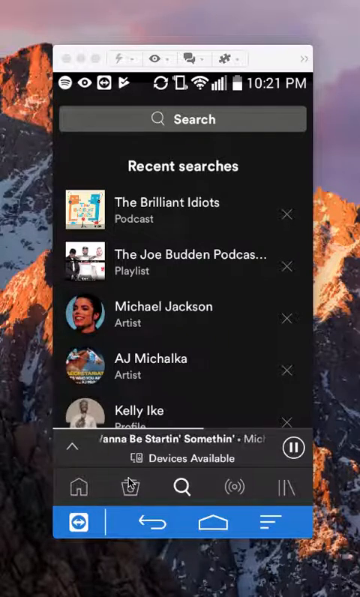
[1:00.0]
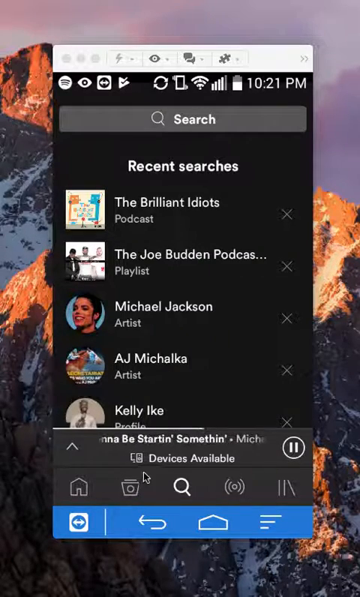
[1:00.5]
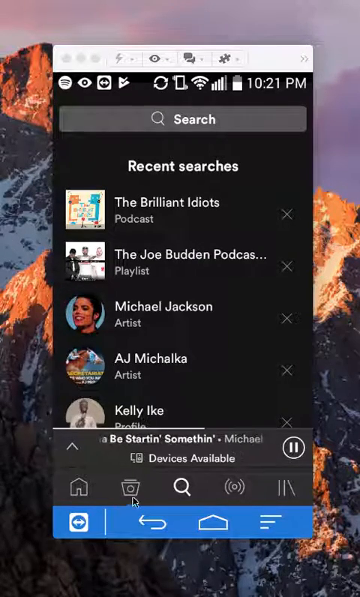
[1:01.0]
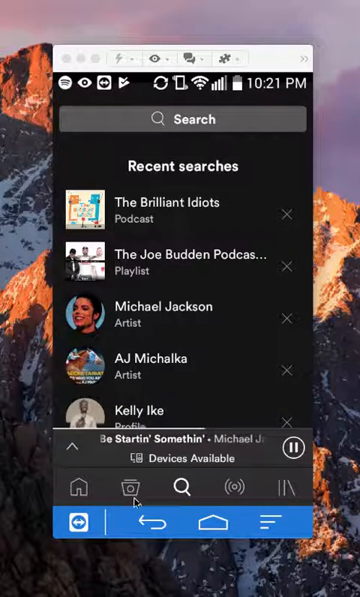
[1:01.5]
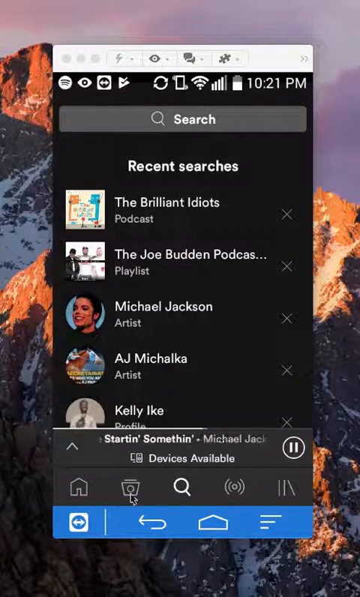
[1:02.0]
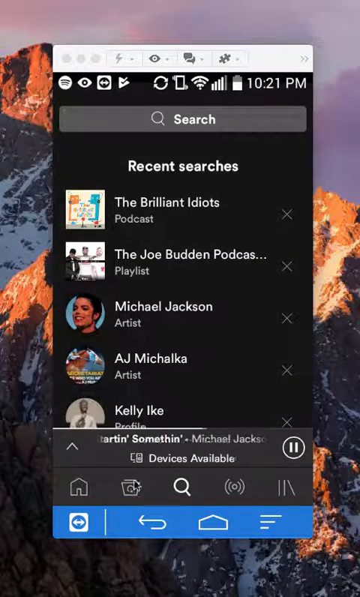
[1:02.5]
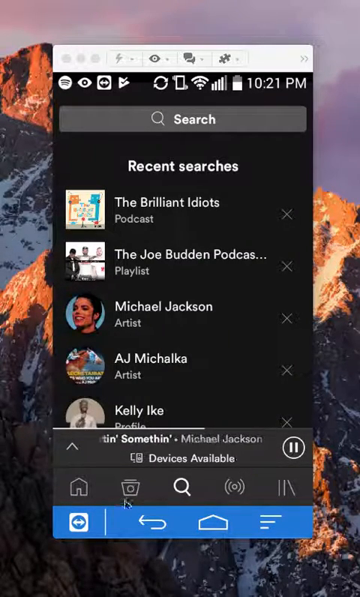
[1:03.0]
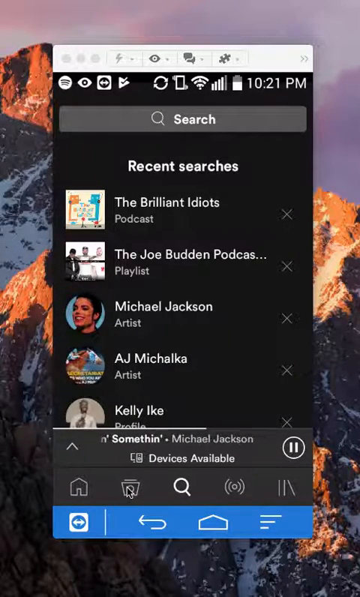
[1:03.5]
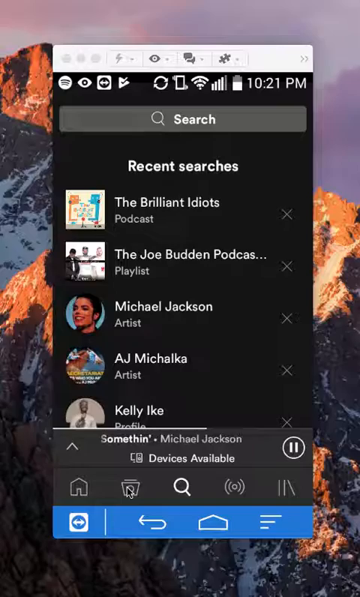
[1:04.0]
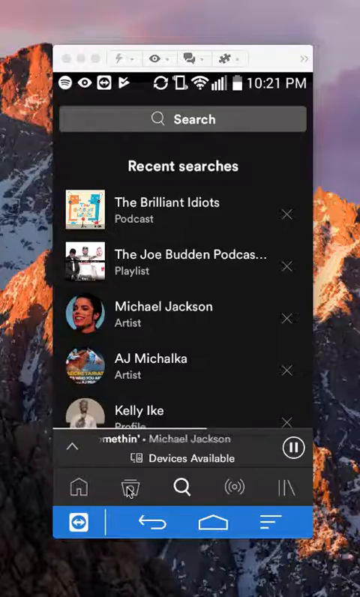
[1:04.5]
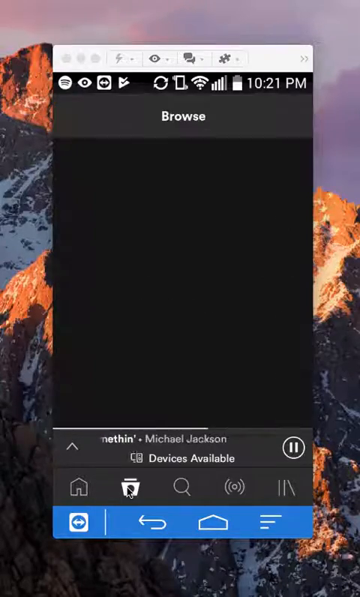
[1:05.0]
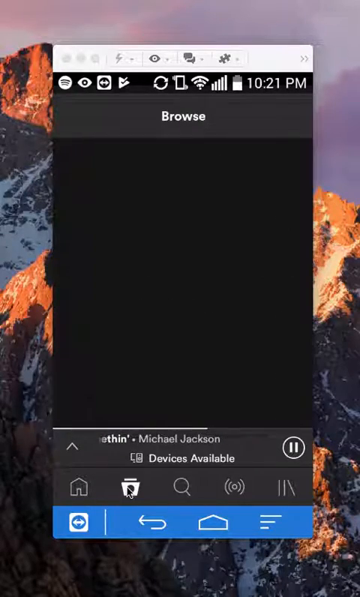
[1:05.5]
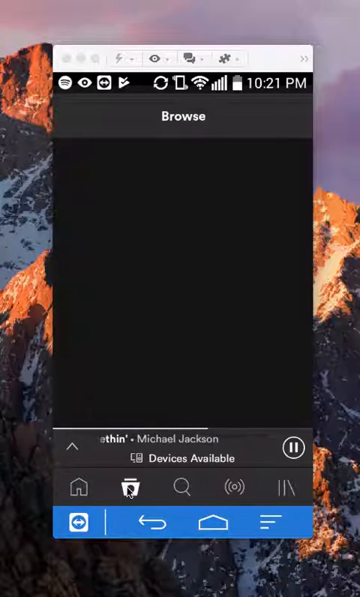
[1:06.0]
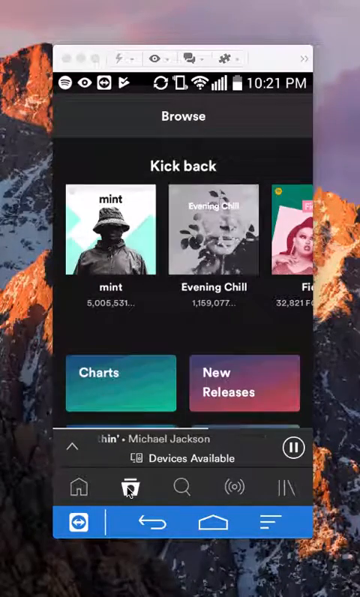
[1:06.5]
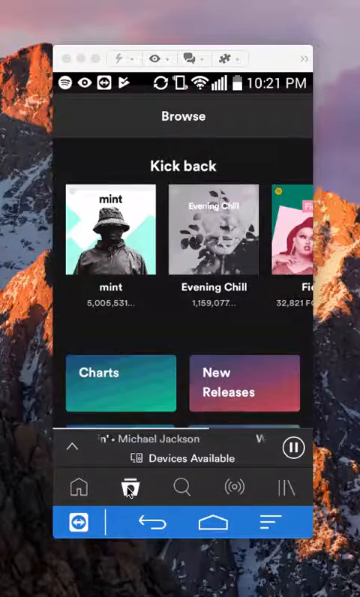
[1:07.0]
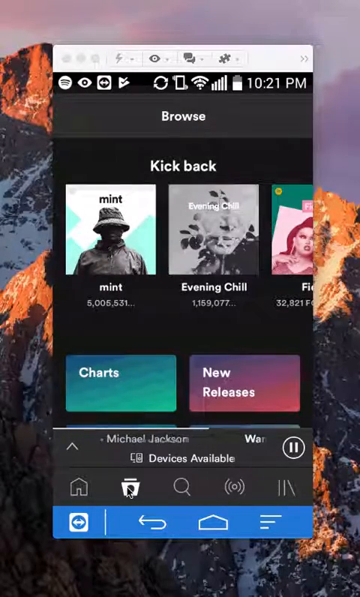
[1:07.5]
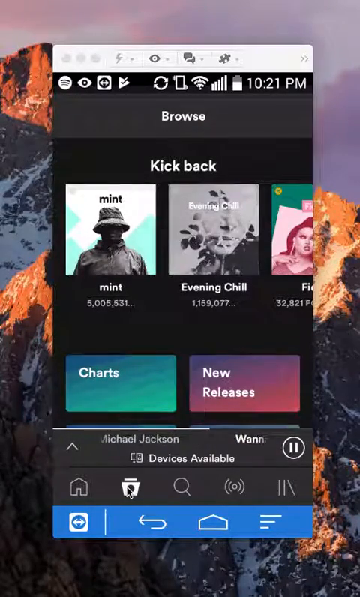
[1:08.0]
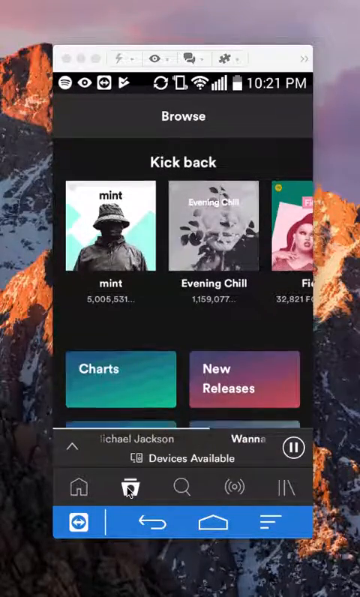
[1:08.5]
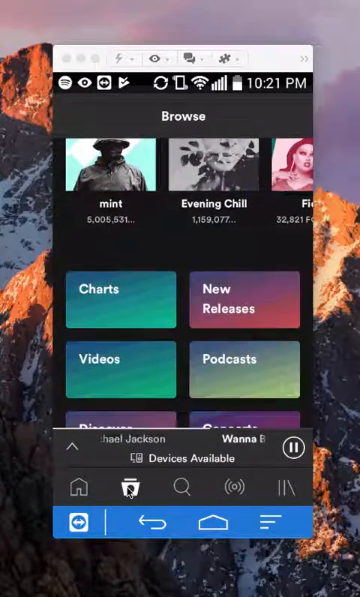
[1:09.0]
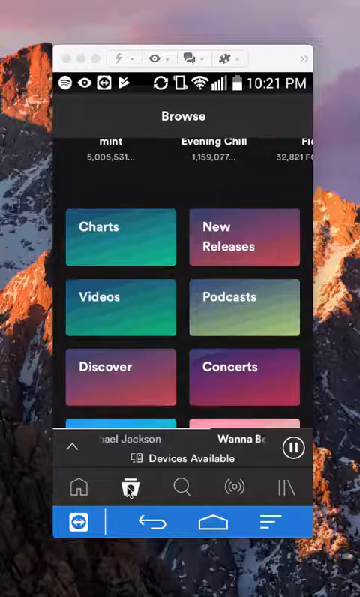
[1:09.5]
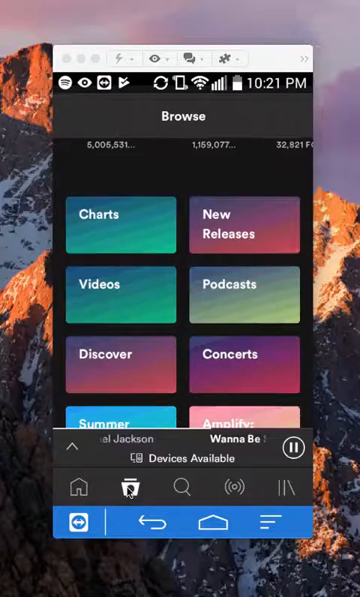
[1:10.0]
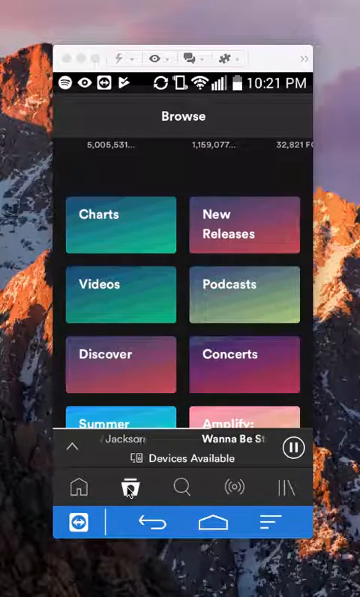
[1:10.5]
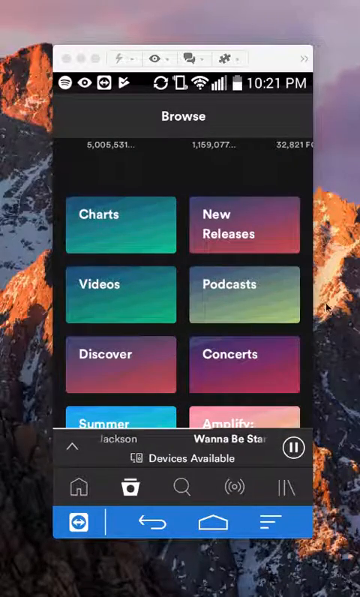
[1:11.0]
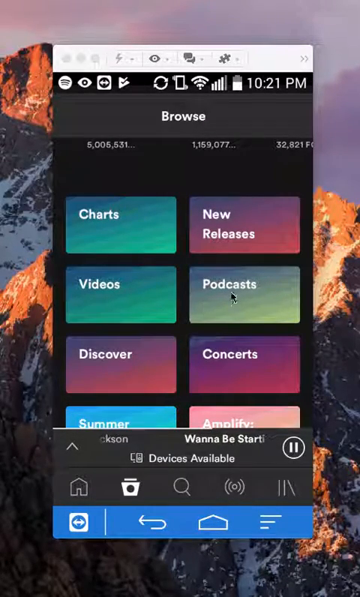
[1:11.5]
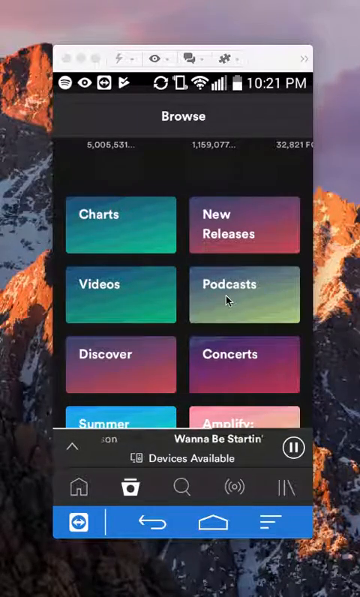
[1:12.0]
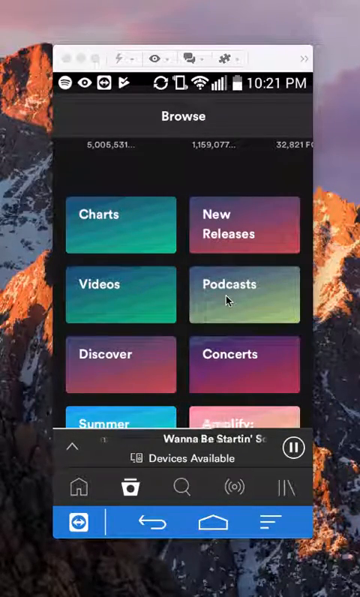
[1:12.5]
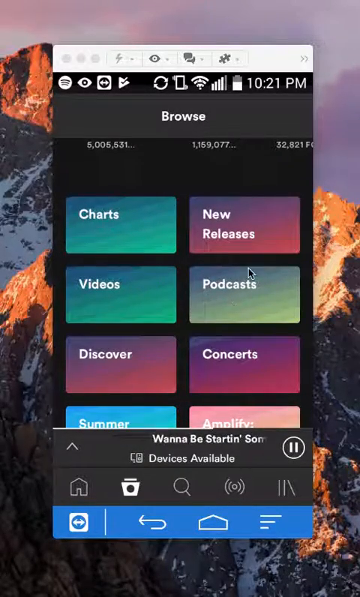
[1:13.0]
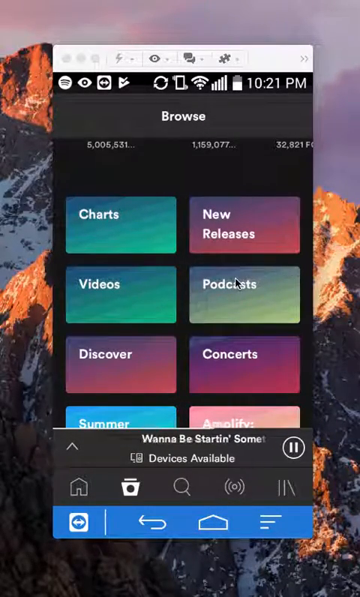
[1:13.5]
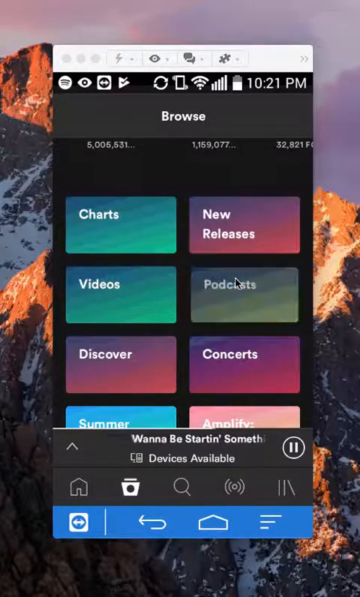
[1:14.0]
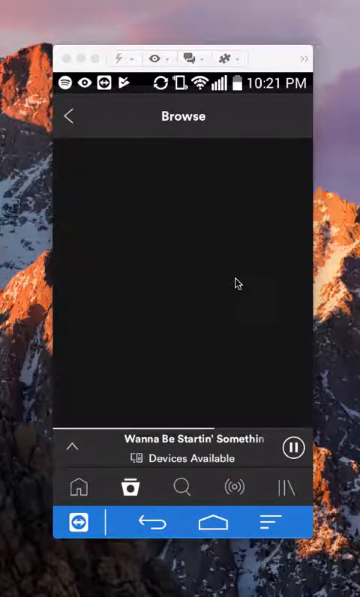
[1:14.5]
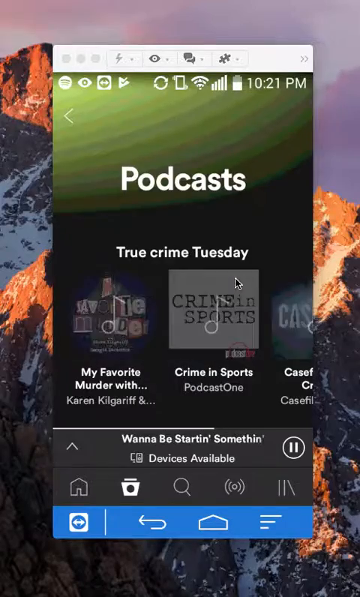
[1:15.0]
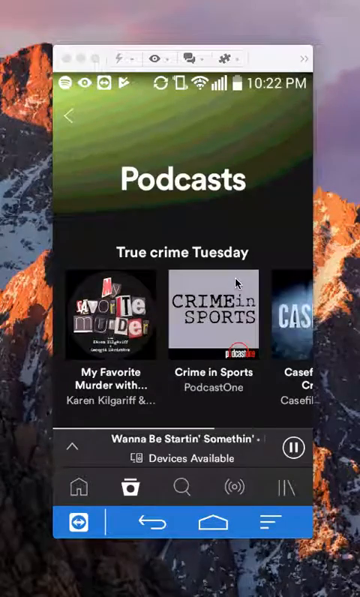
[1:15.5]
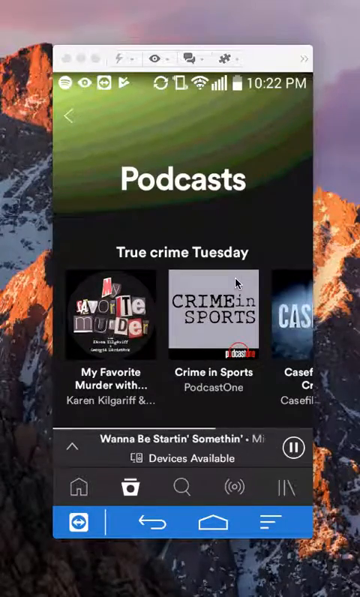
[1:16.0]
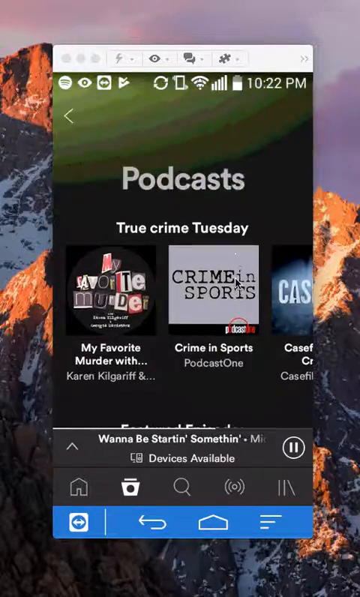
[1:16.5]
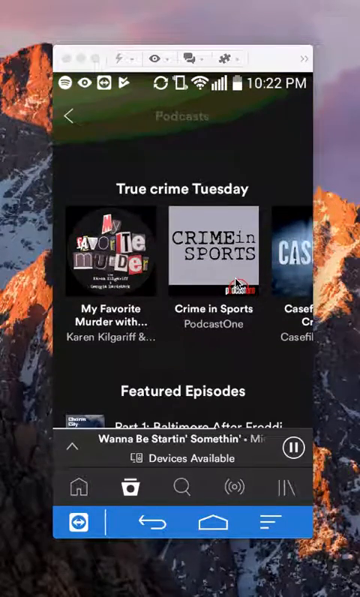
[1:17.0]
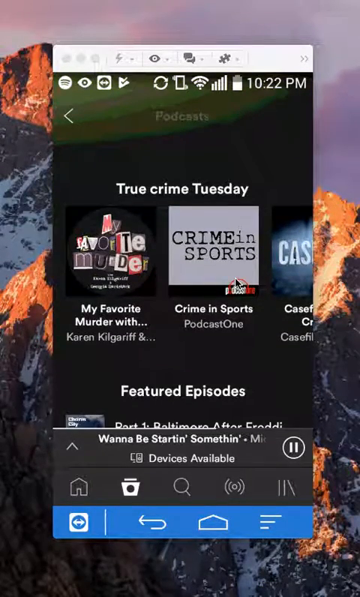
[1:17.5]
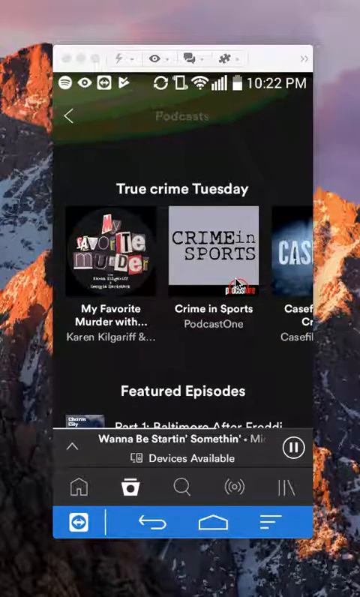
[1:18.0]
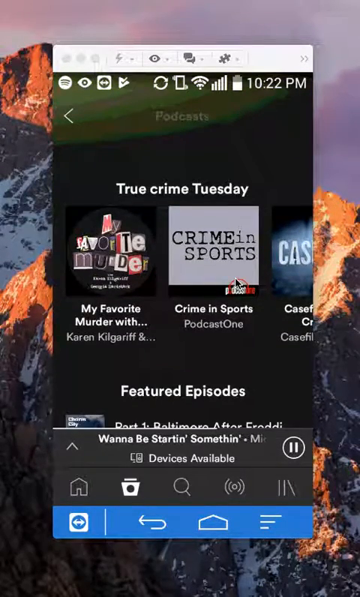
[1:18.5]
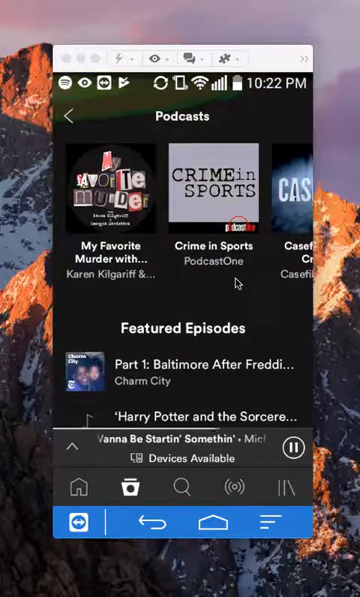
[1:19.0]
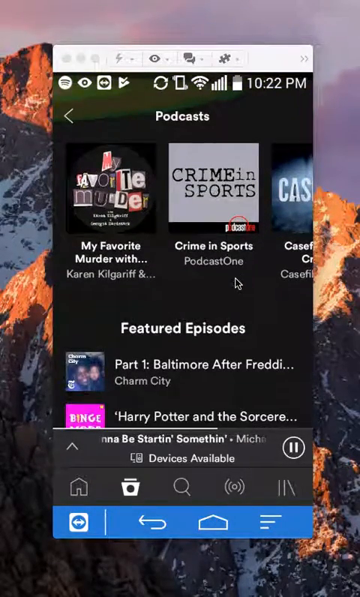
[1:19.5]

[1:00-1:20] A mobile application interface is overlaid on a background image of a cliffside with sun spilling on the snow and rock face. The interface is a music application with the search page in focus, showing the recent searches The Brilliant Idiots, The Joe Budden Podcast, Michael Jackson, AJ Michalka and Kelly Like, each with an avatar next to its title. A pointer circles around the icon second from the left on the bottom row. This row has a home icon, a second icon that looks to be the browse icon, the search icon, live radio, and a library. The browse icon is selected, and the top of the browse page shows the title "Kickback" with different curated playlists: the first is Mint, the second Evening Chill, and the third is Blocking the Name. Mint has a black and white picture of a man in a raincoat and a mask. Evening Chill has a close-up image of a flower. Underneath this section are different selectable categories, each with a different colored background: Charts, New Releases, Videos, Podcasts, Discover, Concerts, Summer and Amplify. New Releases is pink and purple, Videos green and teal, Podcasts lime green, Discover a pink and purple combination, Concerts magenta and violet, Summer light blue, and Amplify pink and orange.